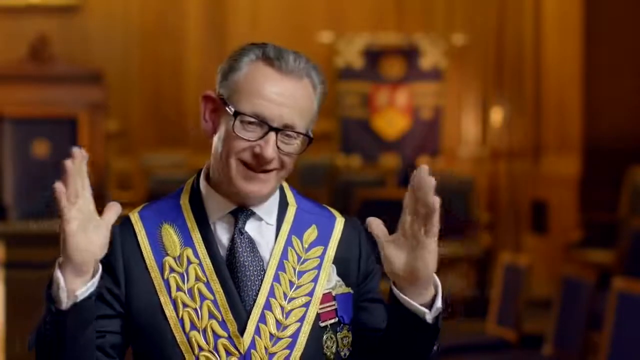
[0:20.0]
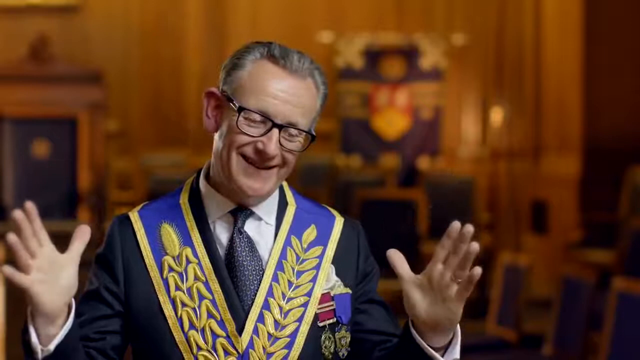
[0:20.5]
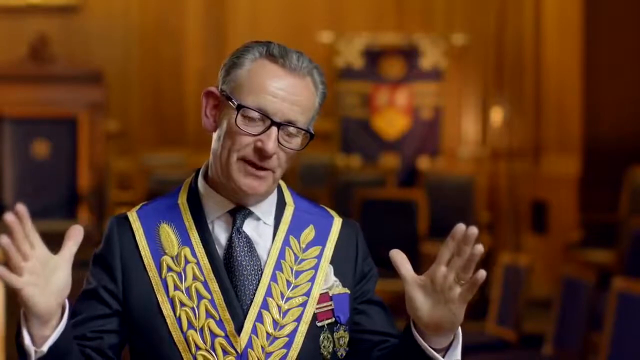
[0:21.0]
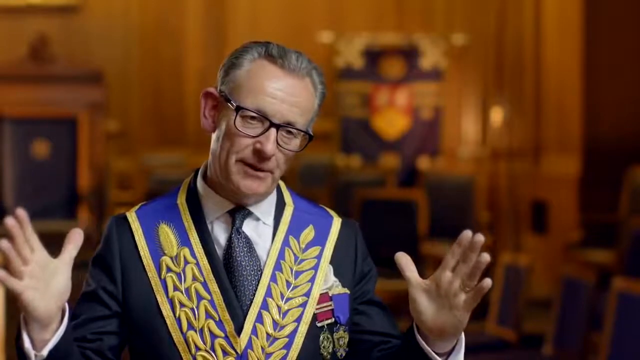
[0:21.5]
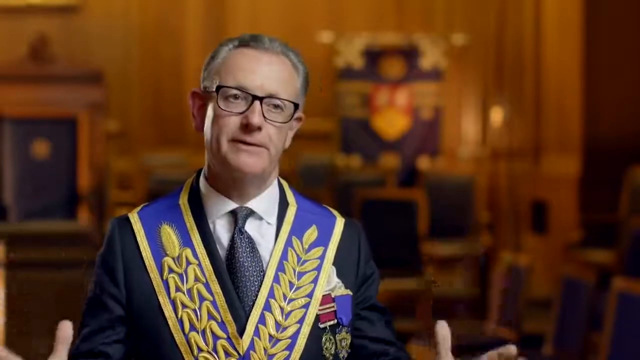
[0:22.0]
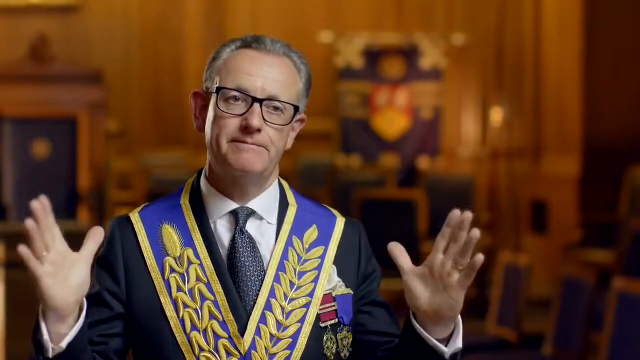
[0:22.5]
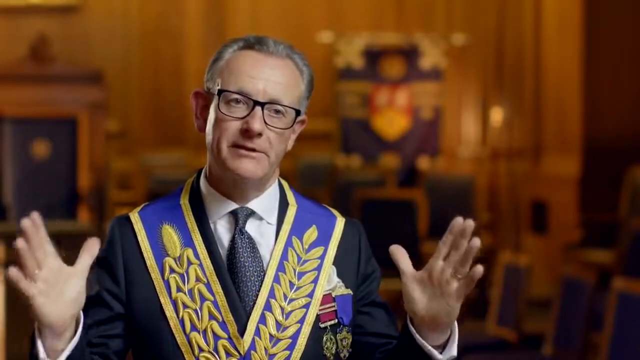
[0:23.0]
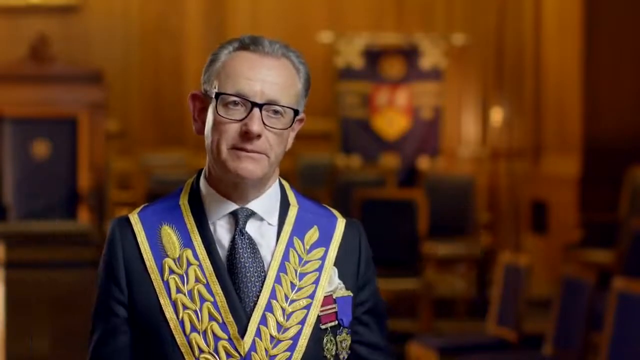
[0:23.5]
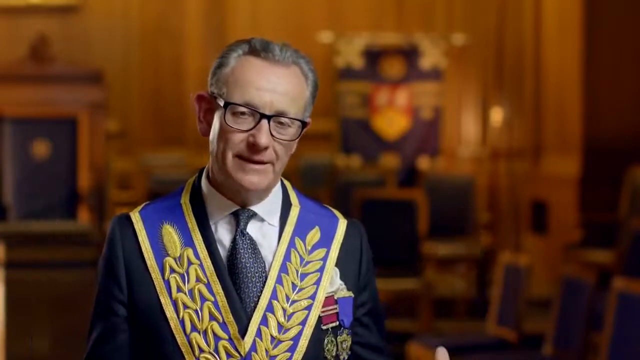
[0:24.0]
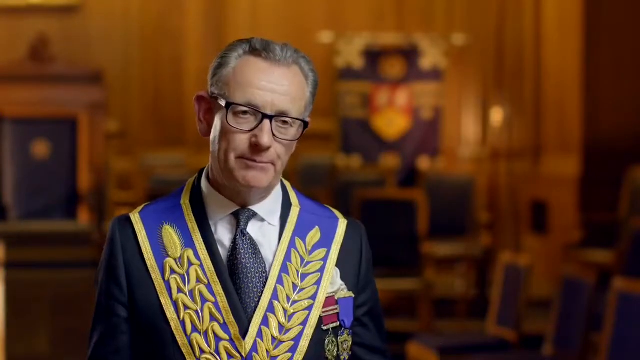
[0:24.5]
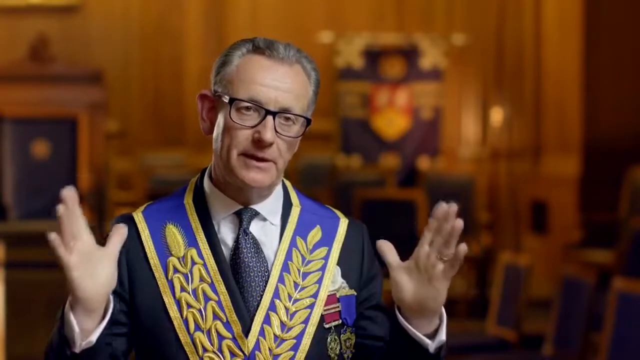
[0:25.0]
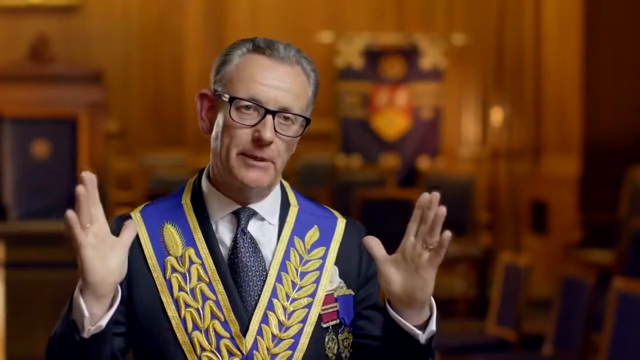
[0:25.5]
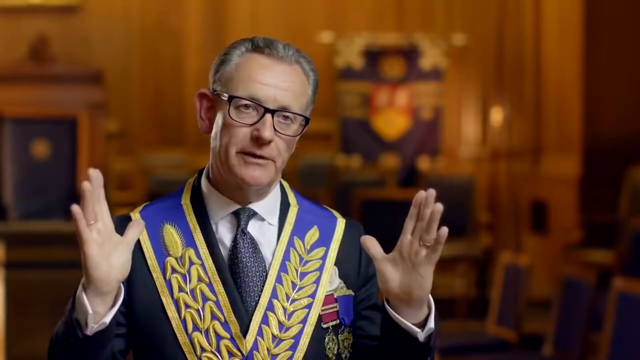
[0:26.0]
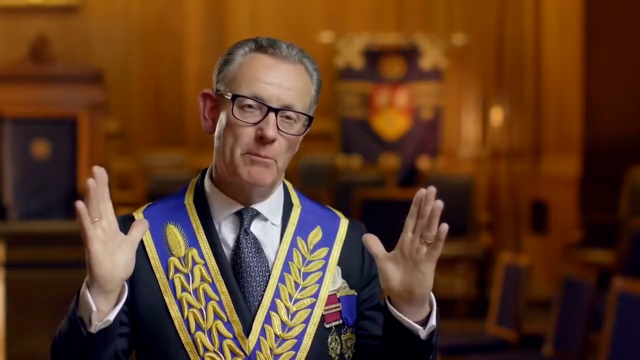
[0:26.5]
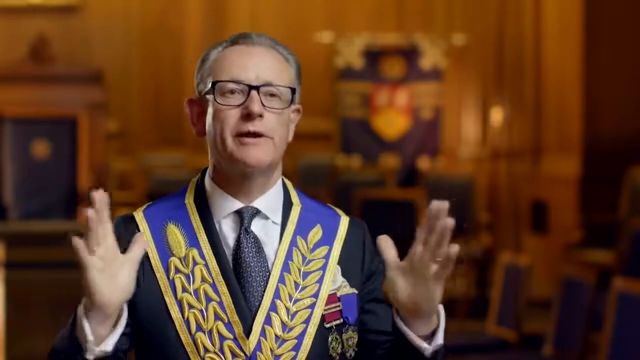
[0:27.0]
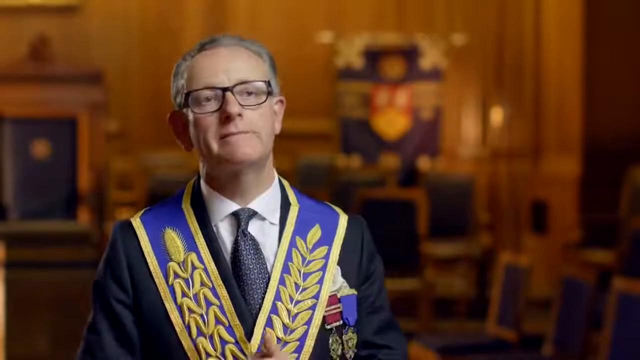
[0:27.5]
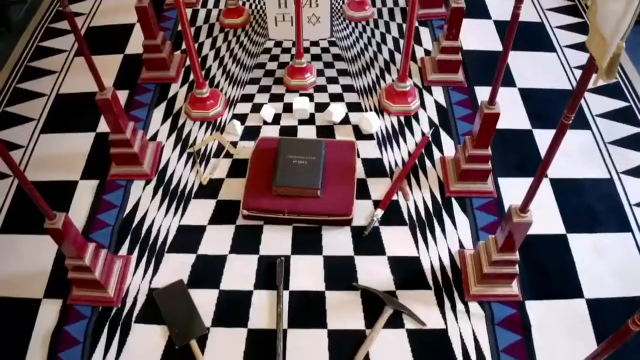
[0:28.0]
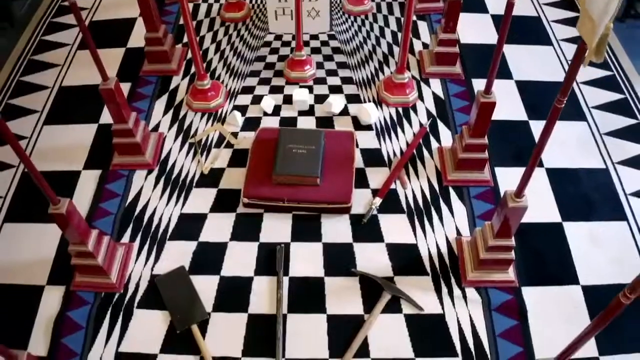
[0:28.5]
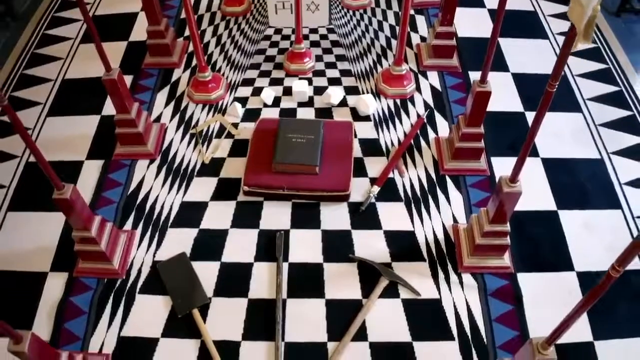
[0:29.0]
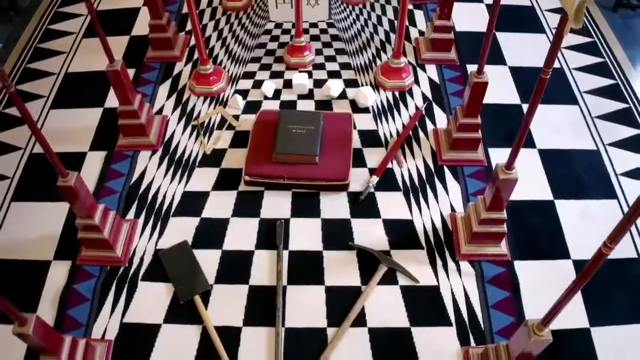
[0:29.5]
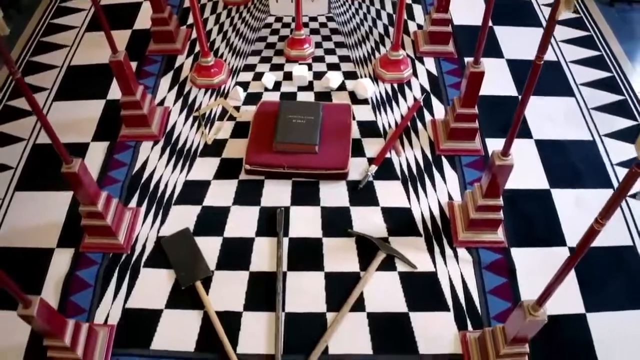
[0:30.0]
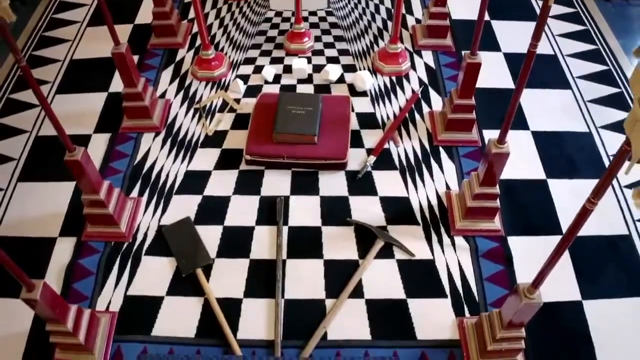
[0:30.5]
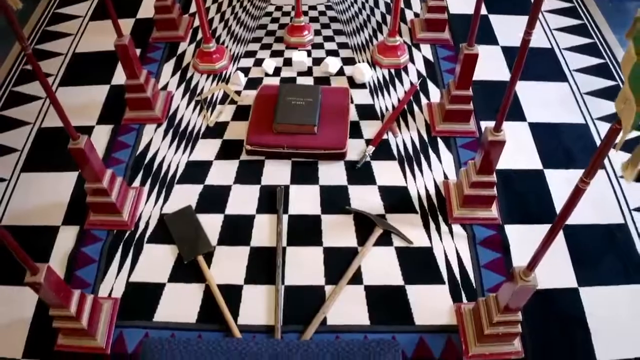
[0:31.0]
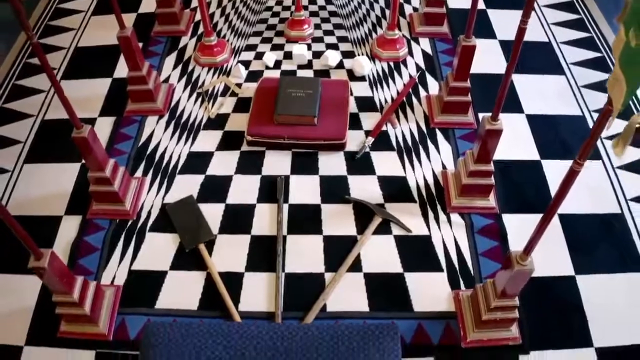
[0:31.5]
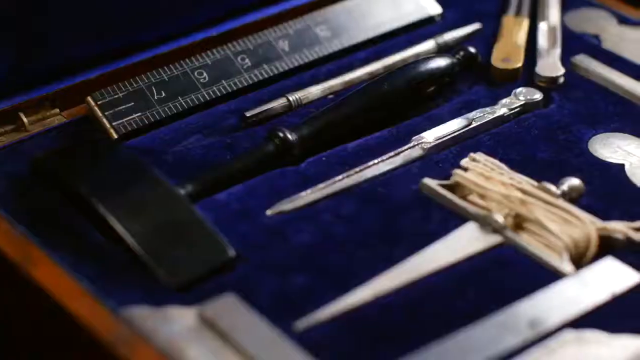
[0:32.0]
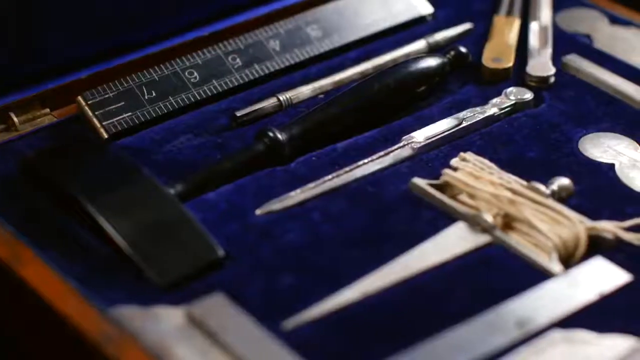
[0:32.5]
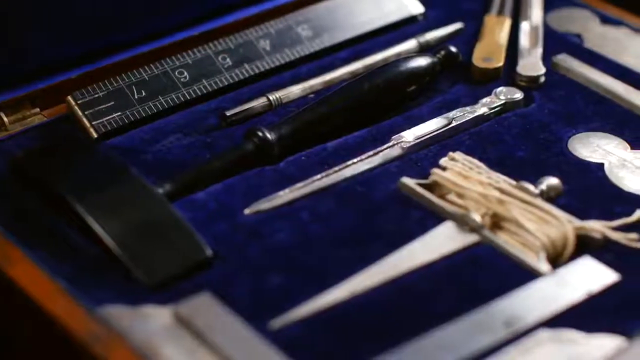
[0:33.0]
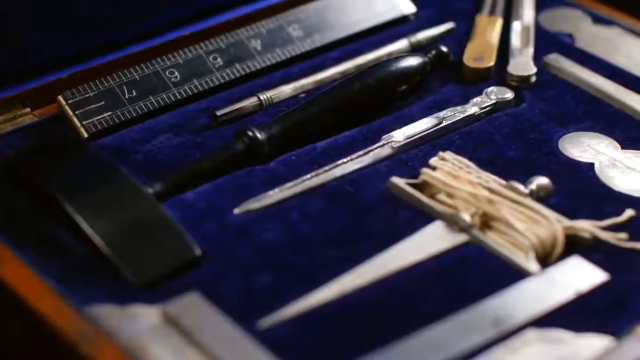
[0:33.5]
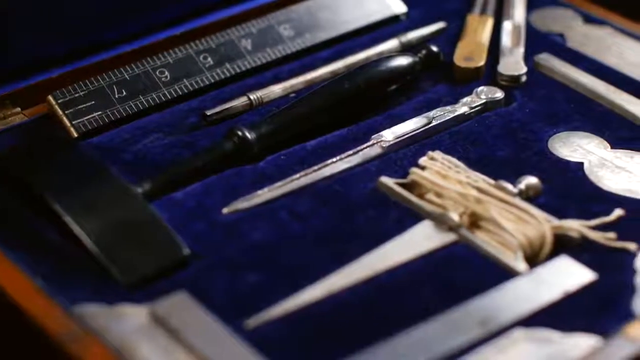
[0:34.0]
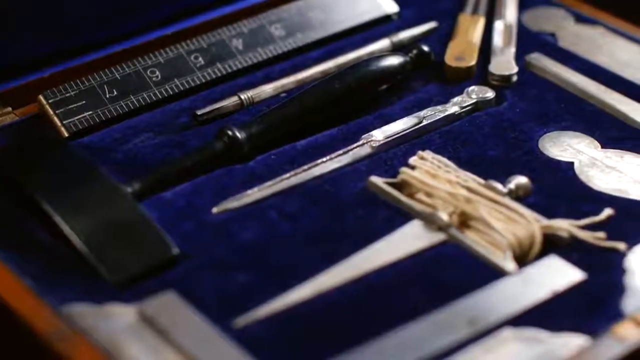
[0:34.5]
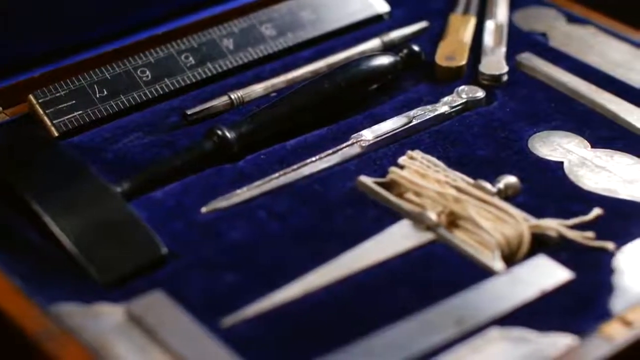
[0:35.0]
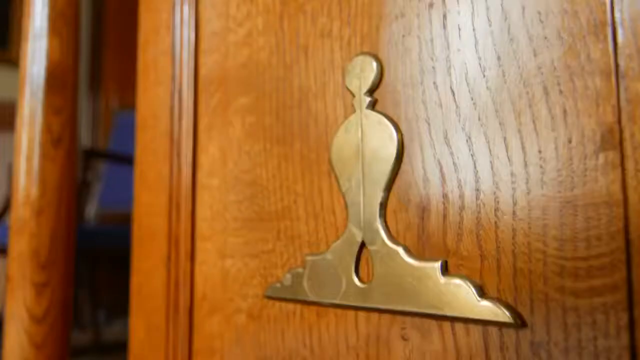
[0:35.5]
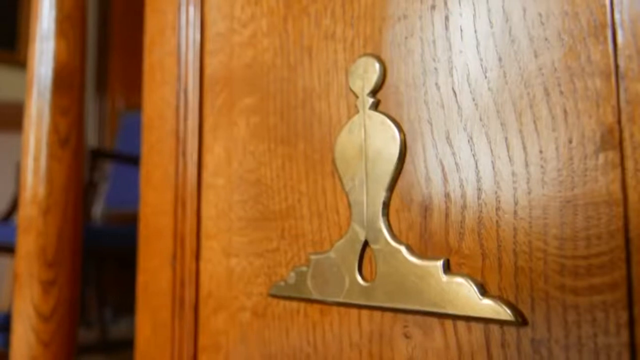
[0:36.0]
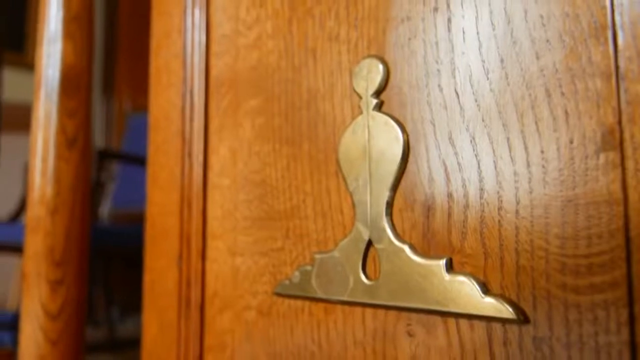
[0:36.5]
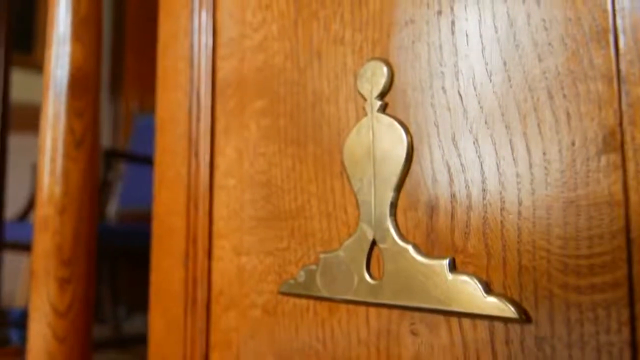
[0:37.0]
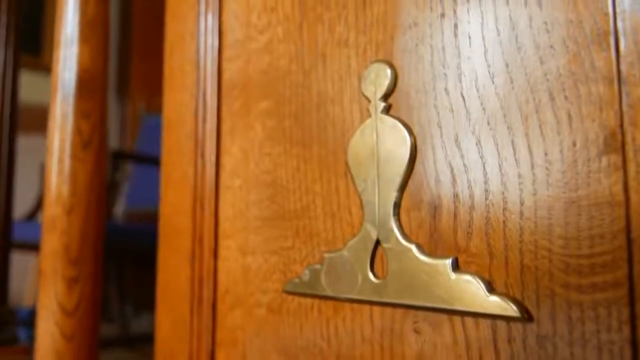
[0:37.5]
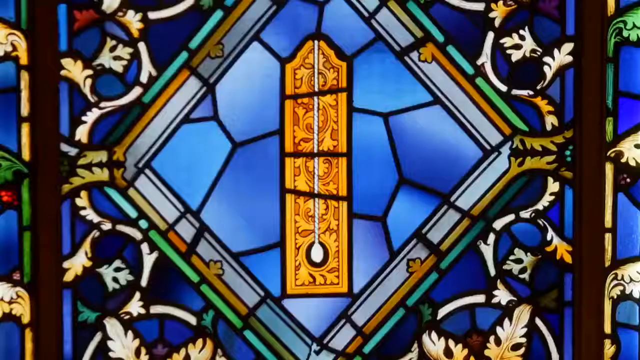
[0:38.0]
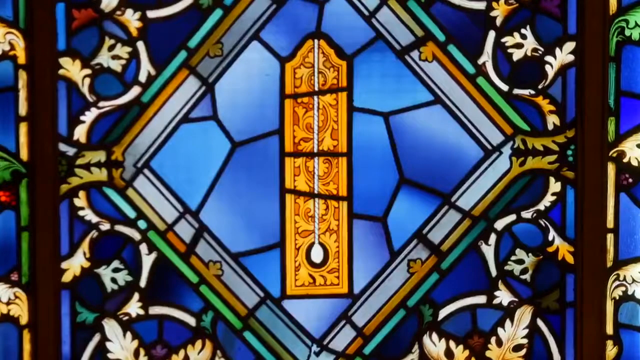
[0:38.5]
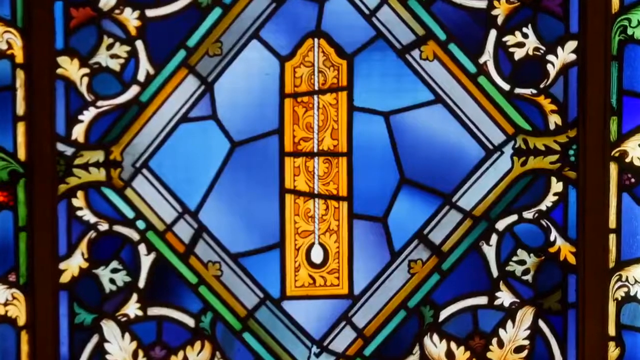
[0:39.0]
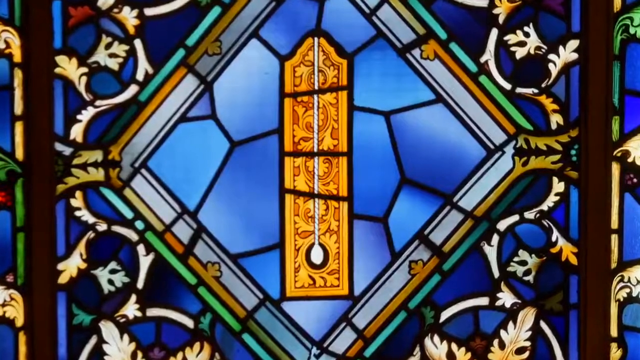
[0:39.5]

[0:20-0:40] The interior looks like some sort of hall, religious temple or synagogue, possibly a church or a hall of a church. A man with a sash over his shoulders speaks into the video; he may be a priest, reverend, rabbi or pastor. An area with a checkerboard floor appears, along with a table that has a checkerboard pattern on it. There are lots of very thin columns, like poles going in an arch on this table. In the center is what looks like a Bible on a burgundy pillow. The video then shows different types of knives and picks, and stained glass. A set is shown with a pin set and a ruler; it appears to hold little silver files and a ruler embedded in it, seated on blue felt. The pieces look like pure silver.